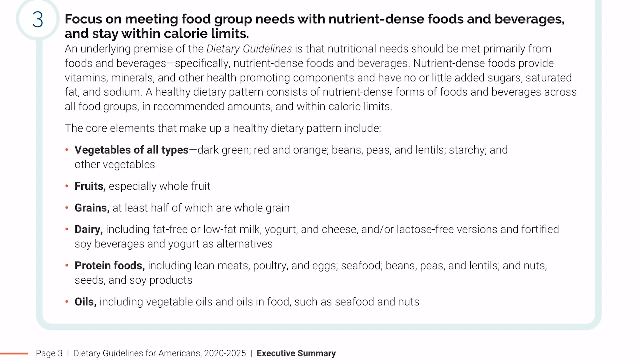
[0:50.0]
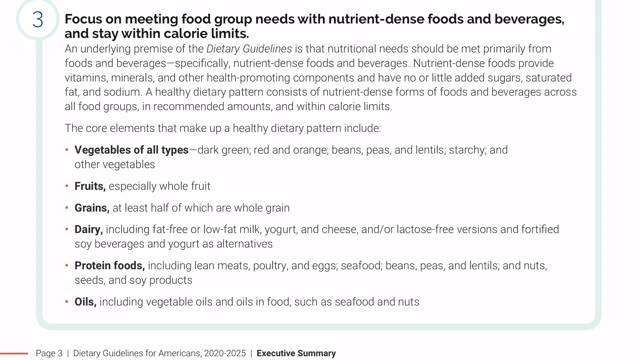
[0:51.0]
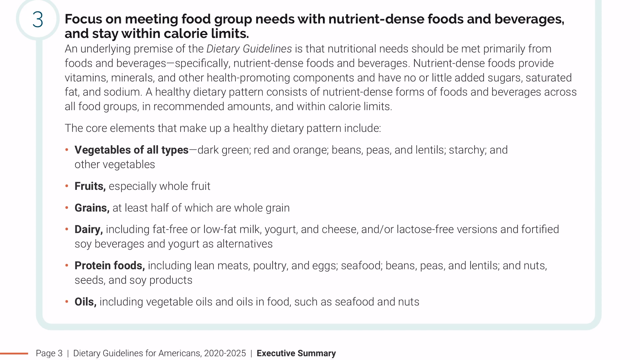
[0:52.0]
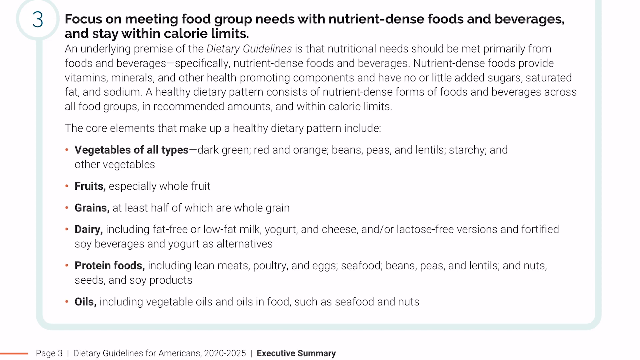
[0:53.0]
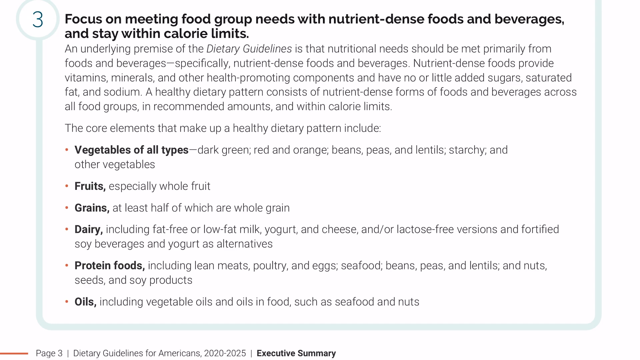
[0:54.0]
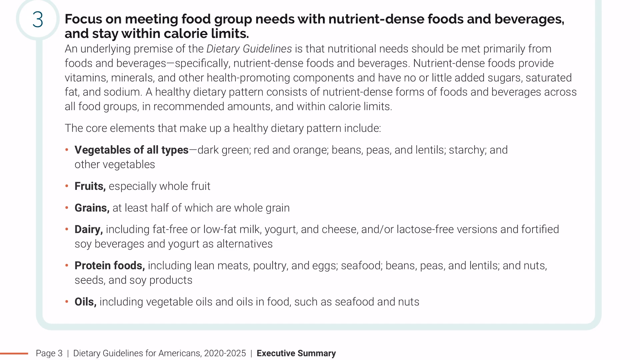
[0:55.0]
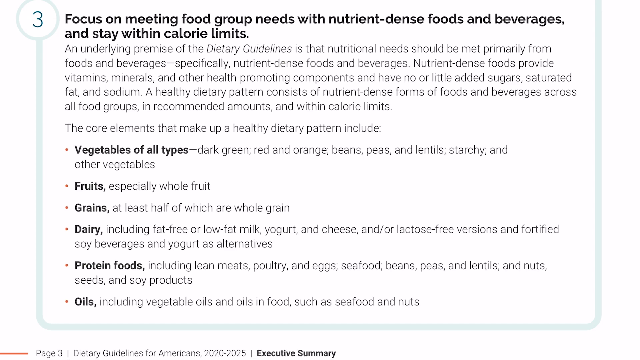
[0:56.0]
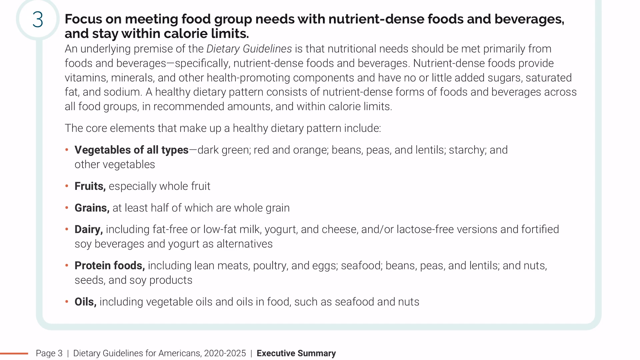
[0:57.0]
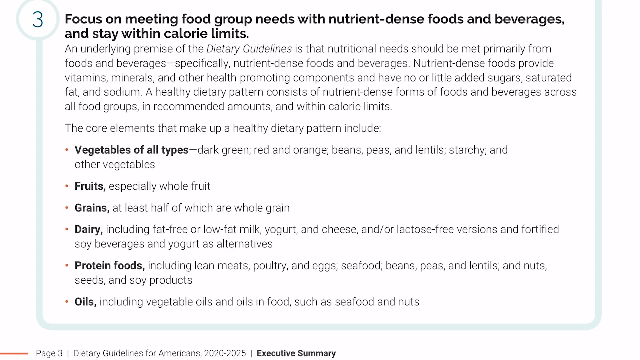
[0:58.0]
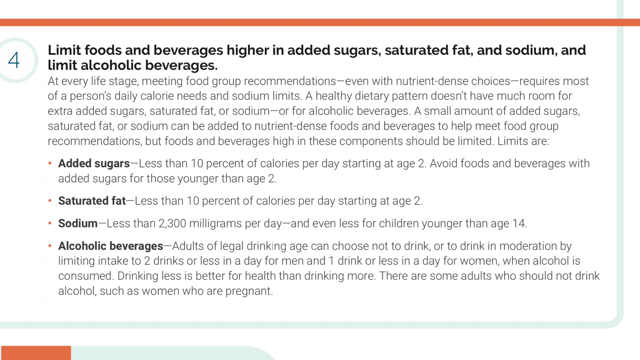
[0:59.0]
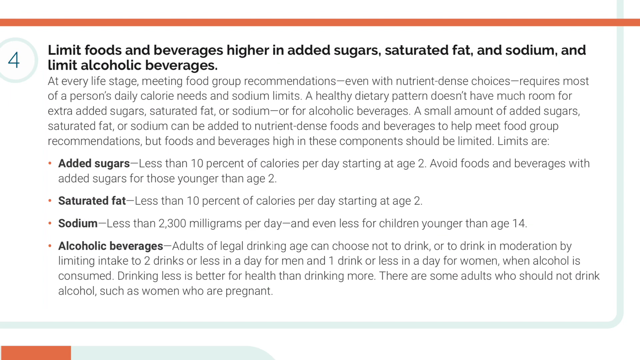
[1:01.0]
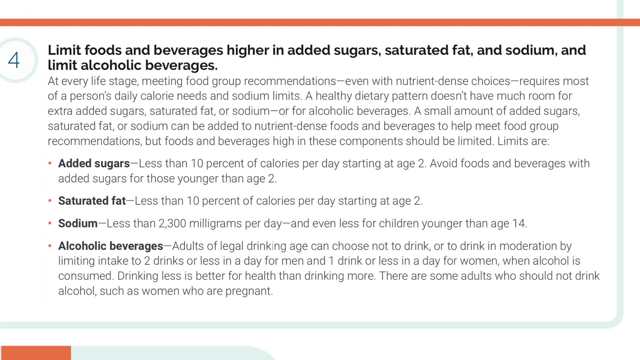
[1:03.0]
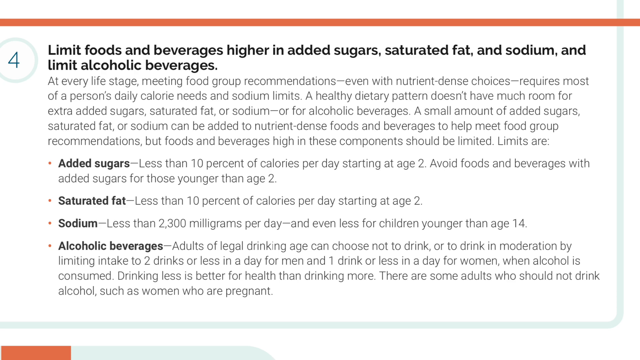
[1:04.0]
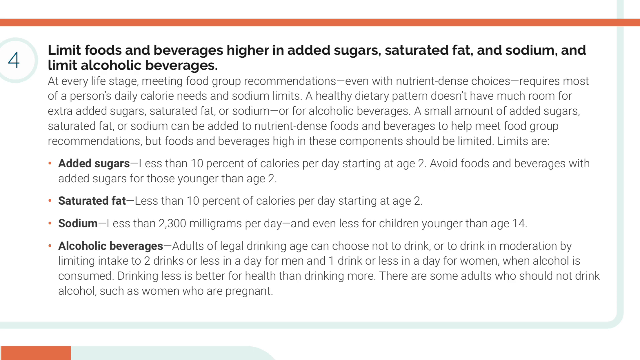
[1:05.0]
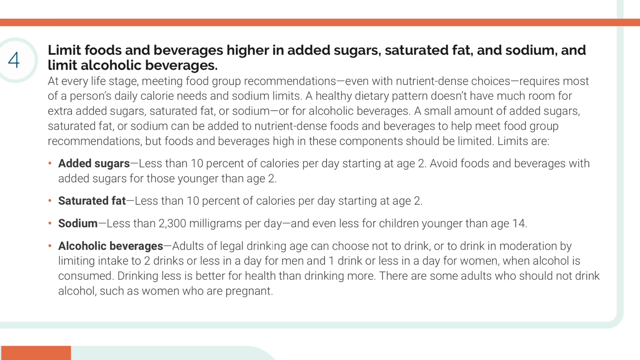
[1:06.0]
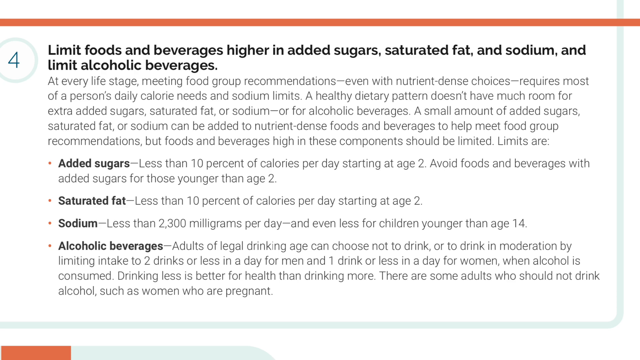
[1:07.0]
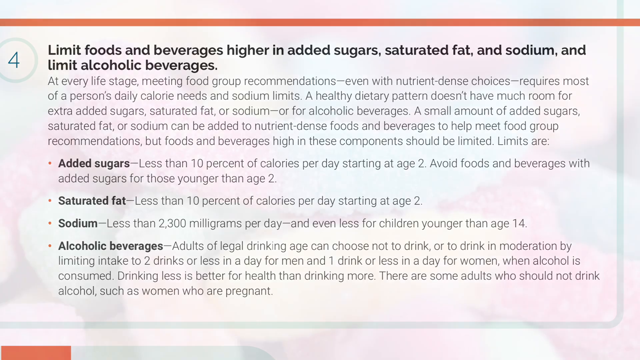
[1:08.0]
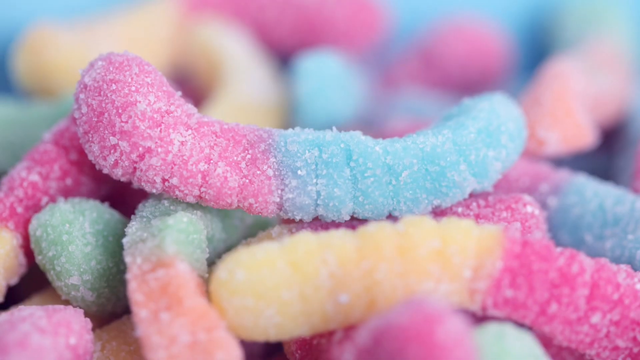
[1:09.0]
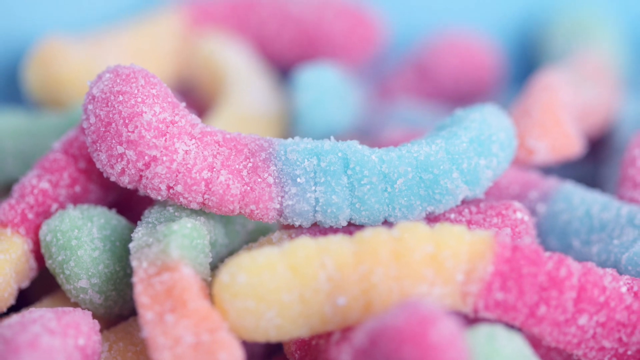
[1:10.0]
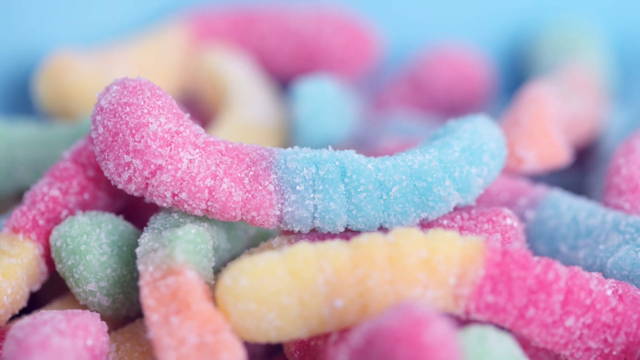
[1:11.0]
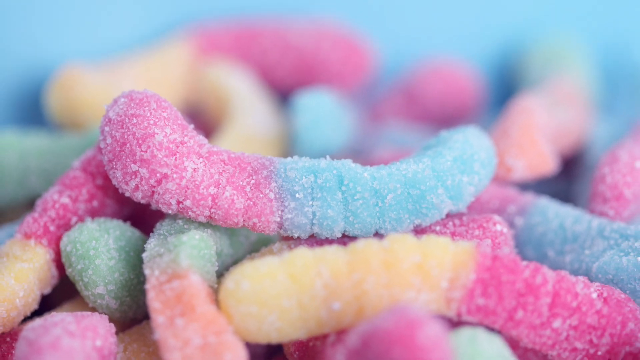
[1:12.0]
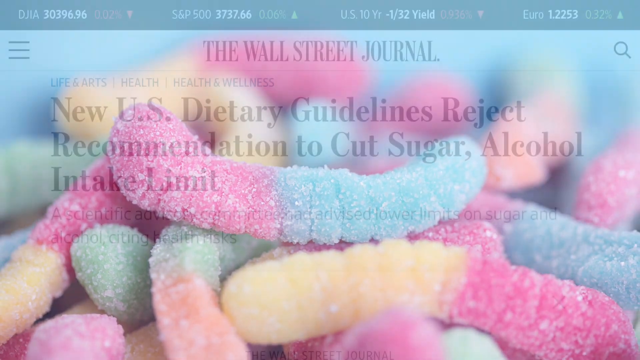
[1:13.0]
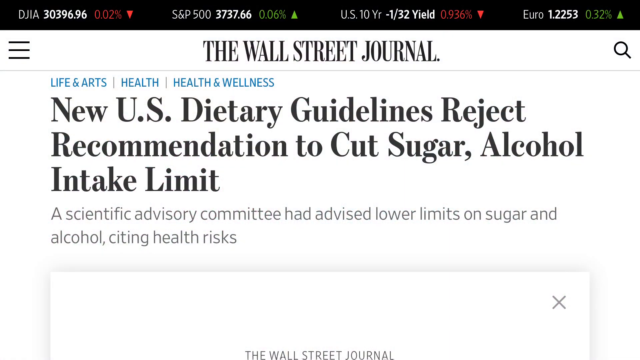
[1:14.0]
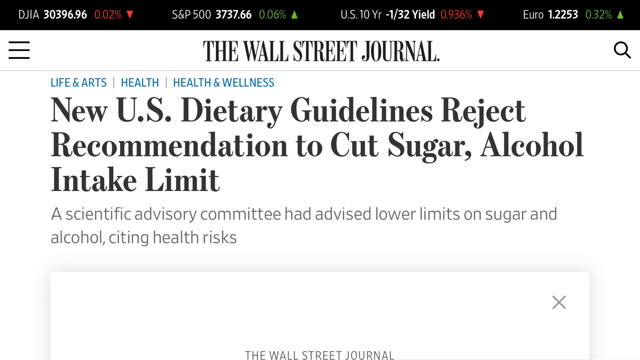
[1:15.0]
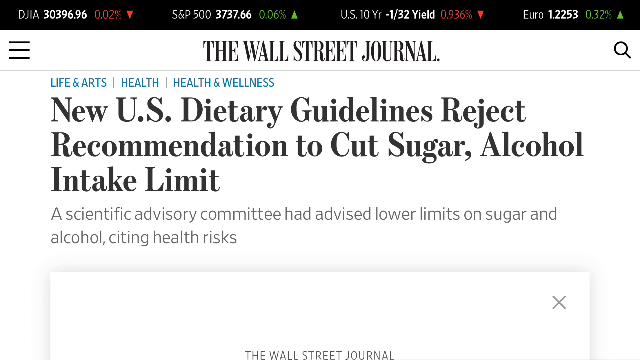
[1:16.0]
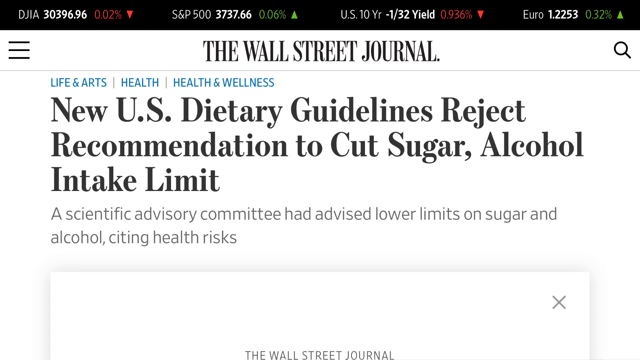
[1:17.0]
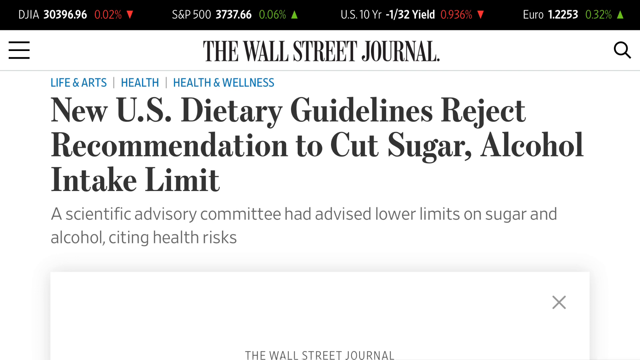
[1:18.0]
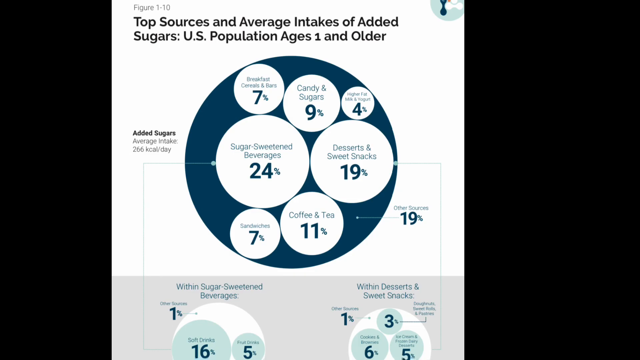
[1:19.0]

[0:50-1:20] The page on focusing on meeting food group needs with nutrient-dense foods and beverages and staying within calorie limits is shown, listing vegetables of all types, fruits, grains, dairy, protein foods and oils. Next is number four: "limit foods and beverages higher in added sugar, saturated fat, and sodium, and limit alcoholic beverages," with information on what added sugars can do, what saturated fat is, what sodium is, and what counts as alcoholic beverages. A picture of sugary, colorful pastel gummy worms in pink, blue, yellow and green follows. Then a headline from the Wall Street Journal reads "new US dietary guidelines reject recommendation to cut sugar alcohol intake limit," with the line "Scientific advisory committee had advised lower limits on sugar and alcohol, citing health risks." Next is a picture graph of sorts titled "top sources and average intake of added sugars in U.S. populations ages one and over," showing seven circles inside a larger circle, each with a different percentage of where added sugars are found in American diets.